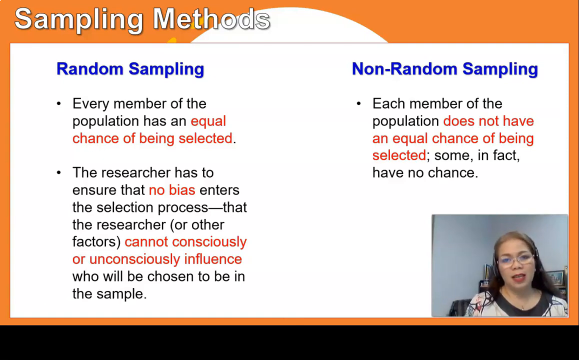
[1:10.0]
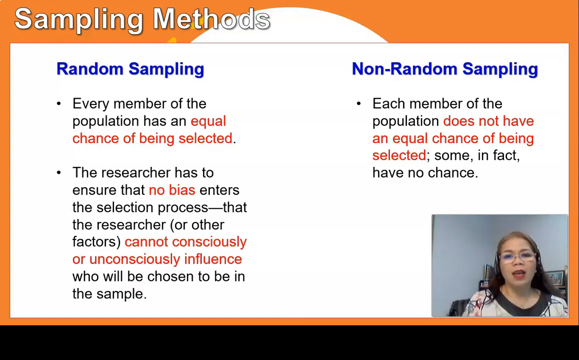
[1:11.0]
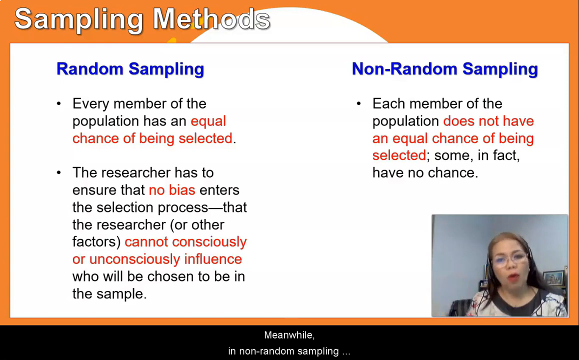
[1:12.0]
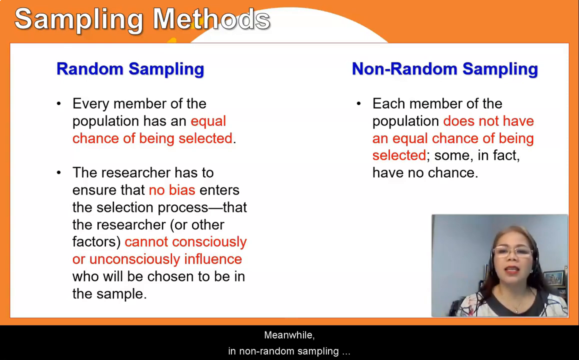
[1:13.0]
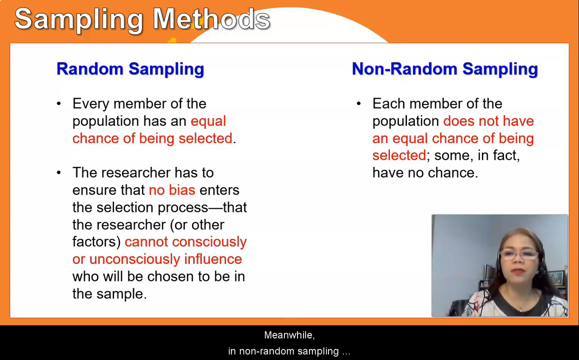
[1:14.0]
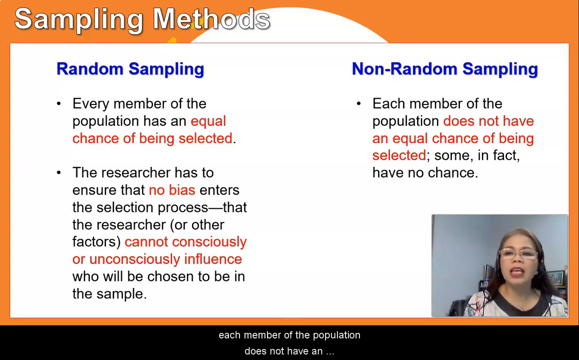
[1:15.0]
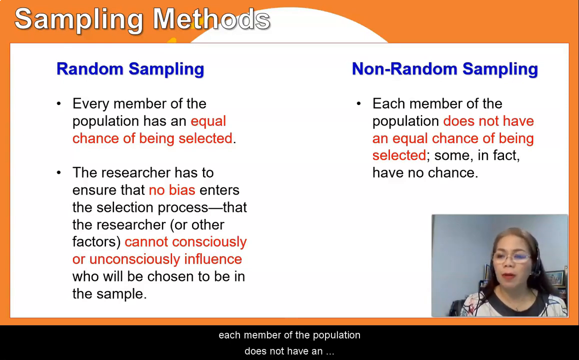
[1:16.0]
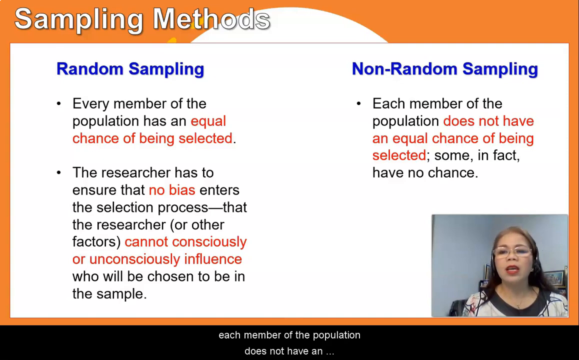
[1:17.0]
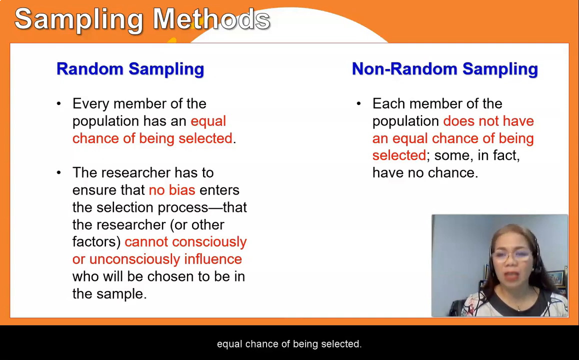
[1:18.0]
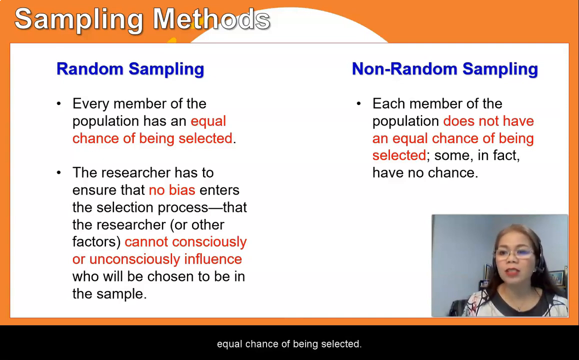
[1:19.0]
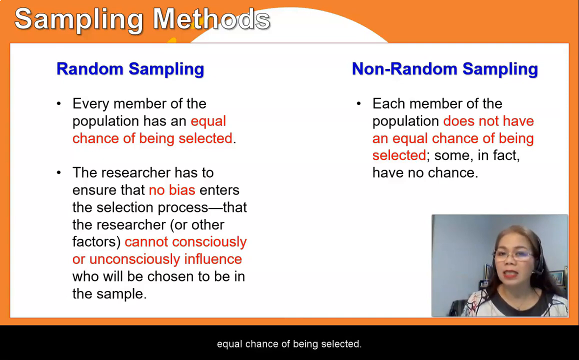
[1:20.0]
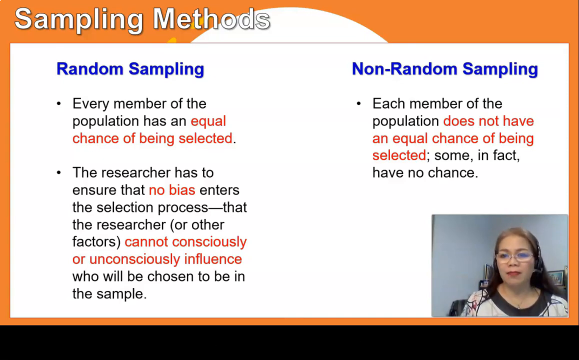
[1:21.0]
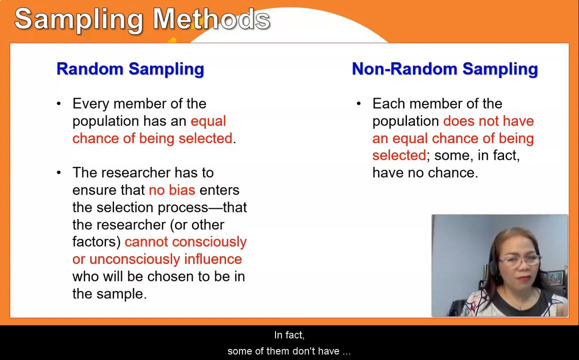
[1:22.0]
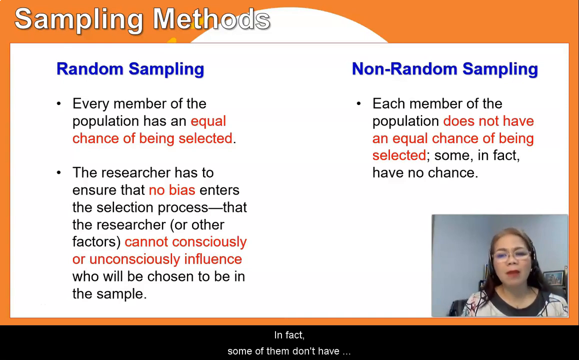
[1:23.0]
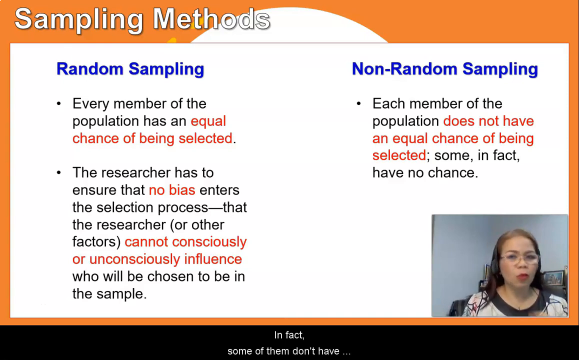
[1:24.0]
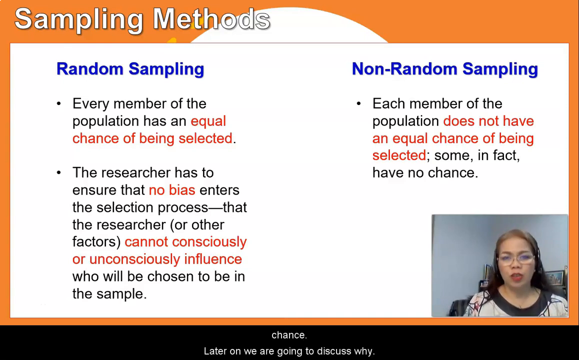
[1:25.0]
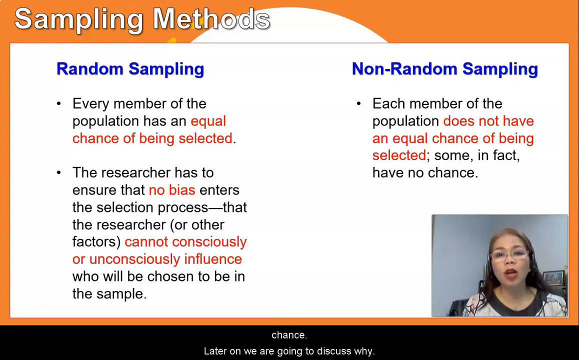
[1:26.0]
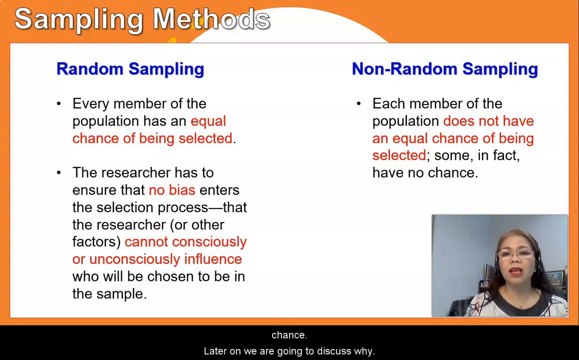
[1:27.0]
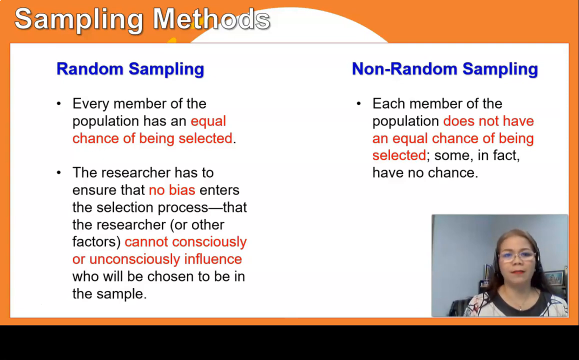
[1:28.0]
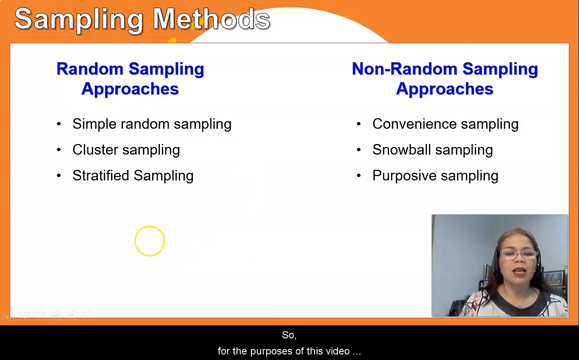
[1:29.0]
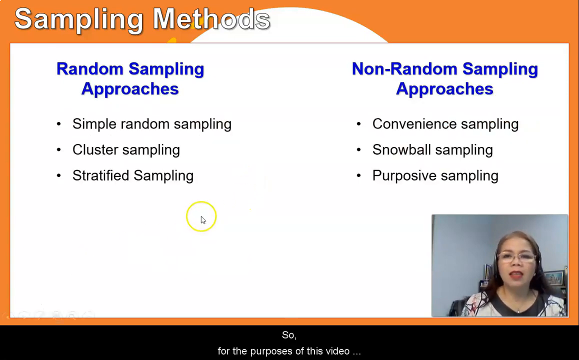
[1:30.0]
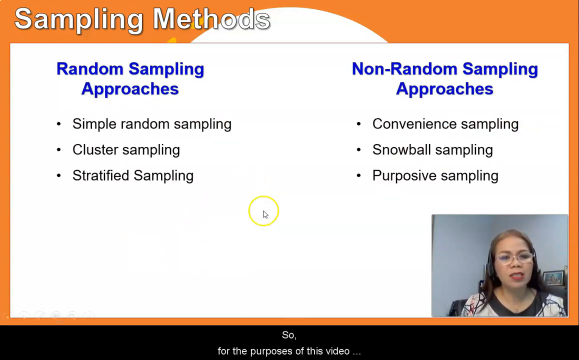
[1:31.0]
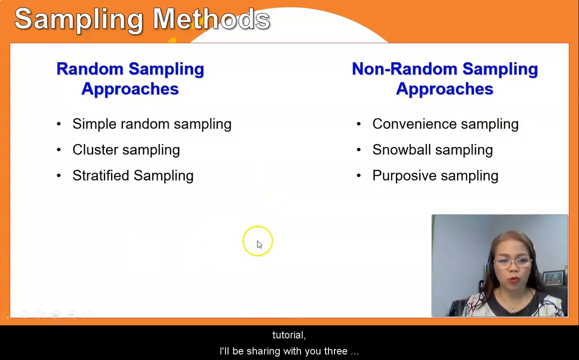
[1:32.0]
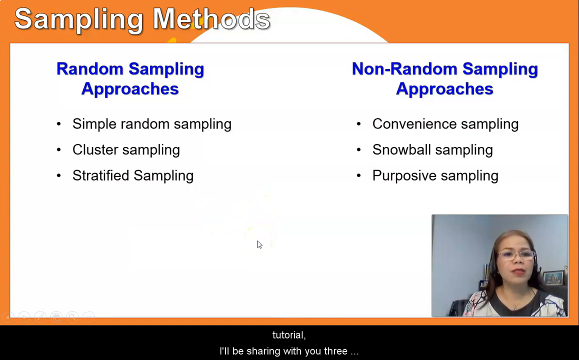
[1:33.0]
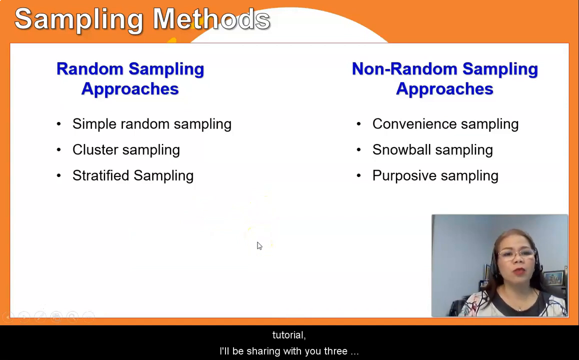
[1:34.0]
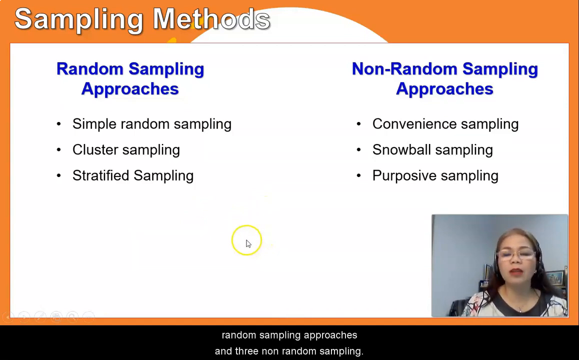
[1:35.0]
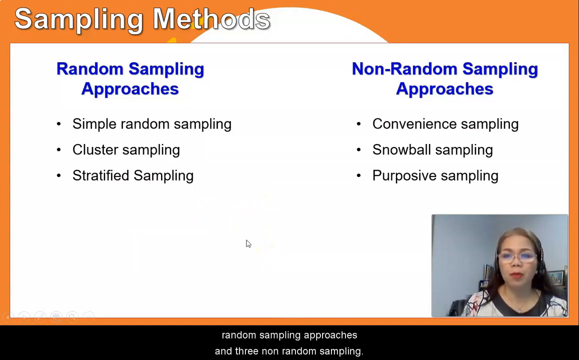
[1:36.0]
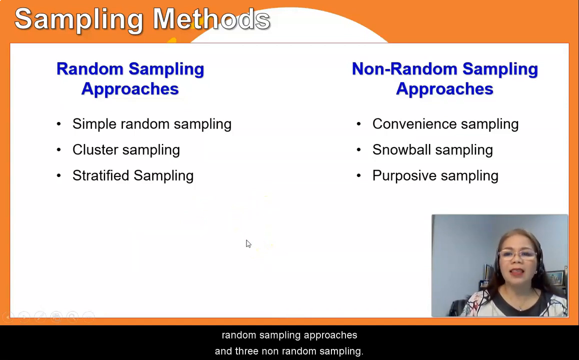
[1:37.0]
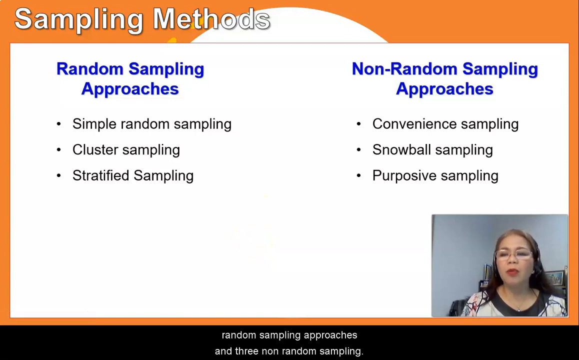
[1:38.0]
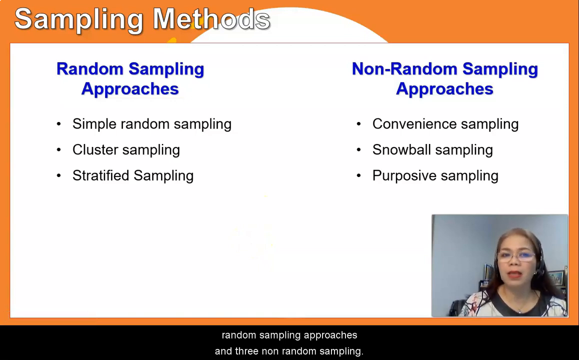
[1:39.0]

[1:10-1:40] The sampling methods slide is on screen, with Dr. Sarah in the bottom right corner just above the orange border of the background, speaking into the webcam and gesturing with both hands. She wears red lipstick, and her head moves back and forth slightly. Along the bottom border, the black banner with white text shows live captions of what she is saying. The cursor is now a white and black arrow with a yellow ring outline marking its position. The screen advances to show two subtitles: "Random sampling approaches" in blue on the left side and "Non-random sampling approaches" on the right side, each with three bullet points. The left ones read "simple random sampling," "cluster sampling" and "stratified sampling"; the right ones read "convenience sampling," "snowball sampling" and "purposive sampling." Dr. Sarah continues to speak, gesturing around some of these sampling approaches.